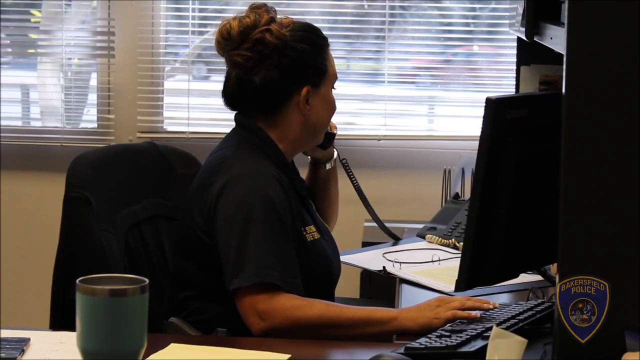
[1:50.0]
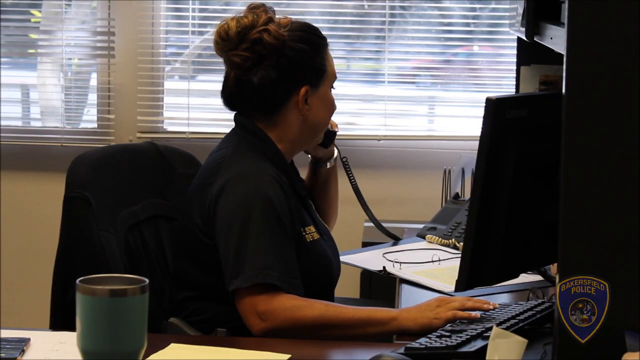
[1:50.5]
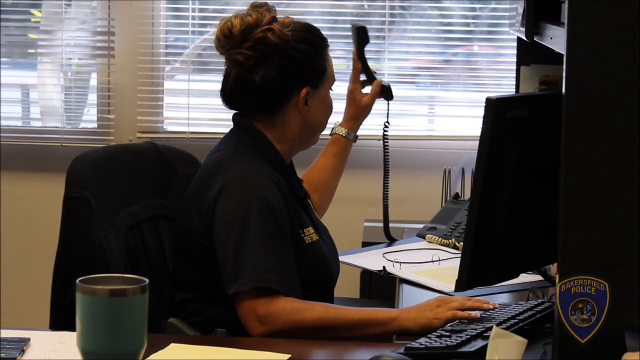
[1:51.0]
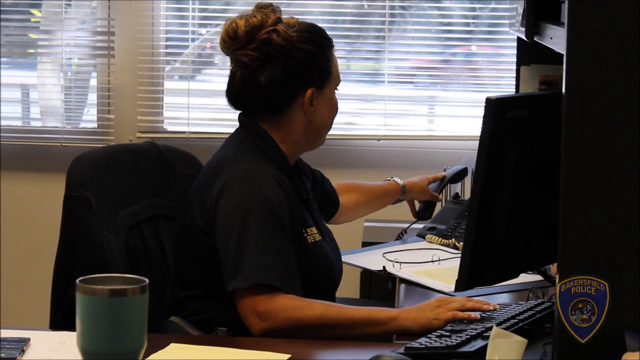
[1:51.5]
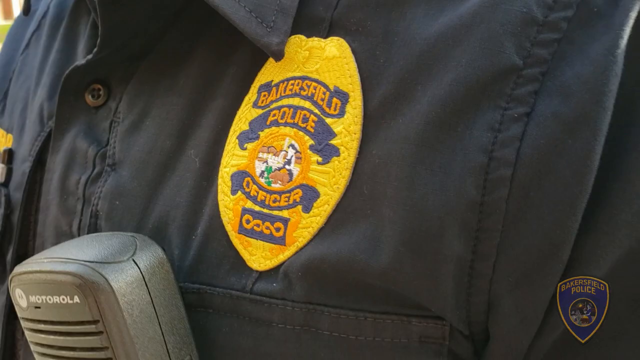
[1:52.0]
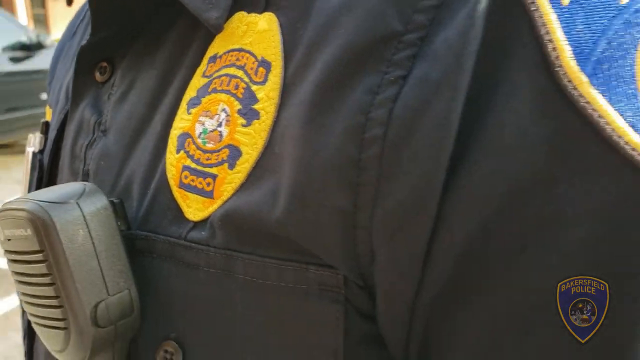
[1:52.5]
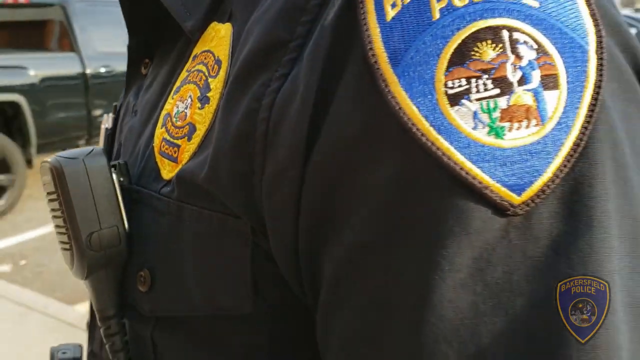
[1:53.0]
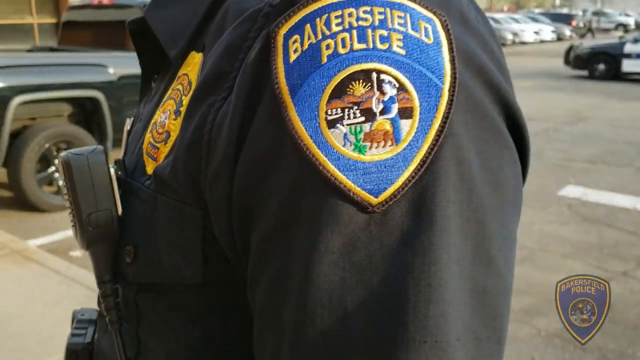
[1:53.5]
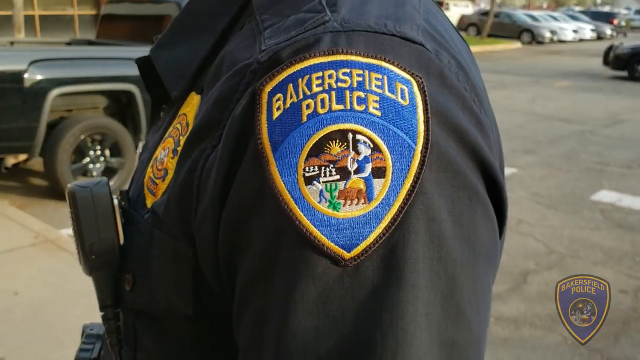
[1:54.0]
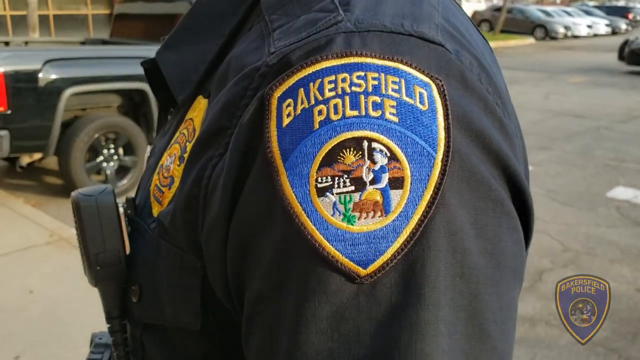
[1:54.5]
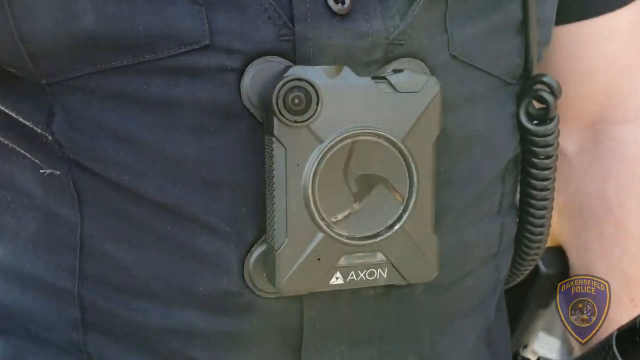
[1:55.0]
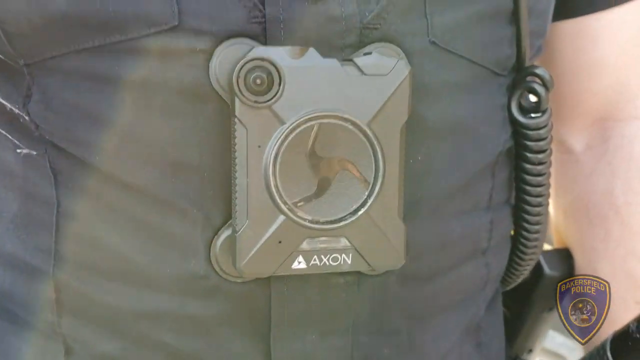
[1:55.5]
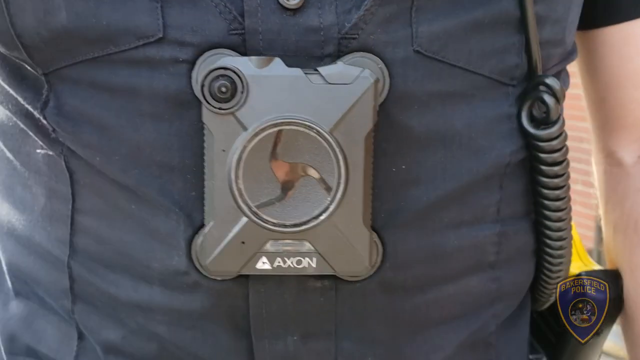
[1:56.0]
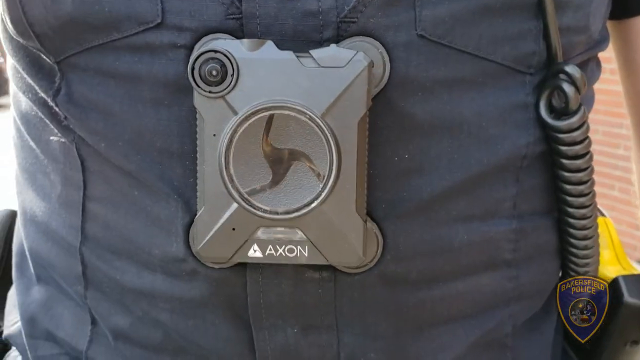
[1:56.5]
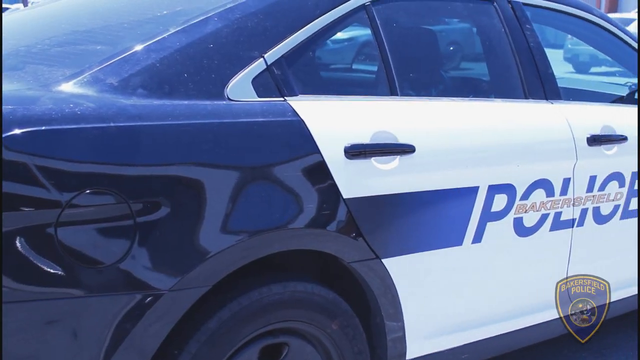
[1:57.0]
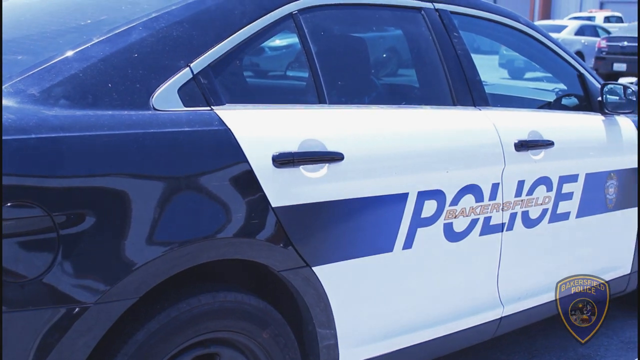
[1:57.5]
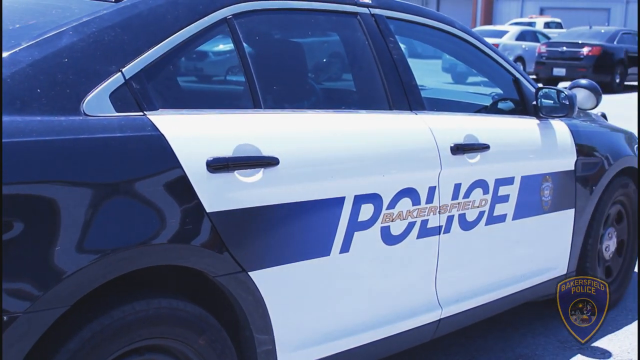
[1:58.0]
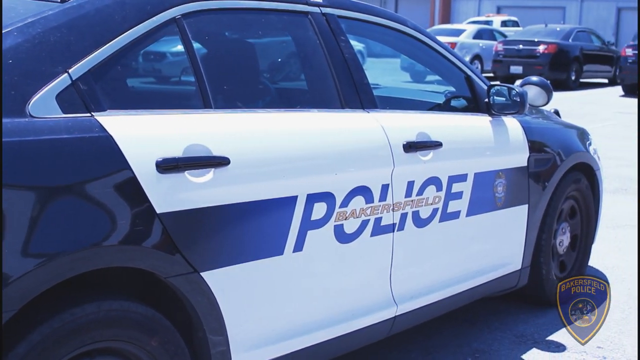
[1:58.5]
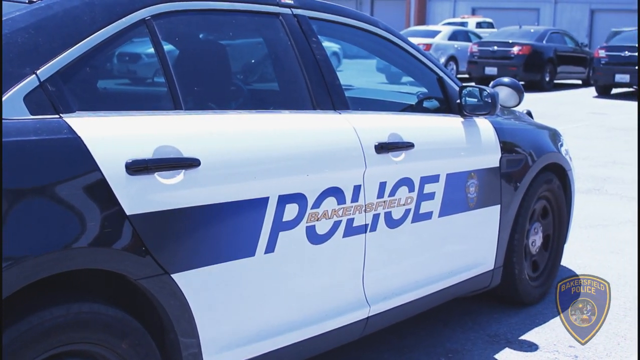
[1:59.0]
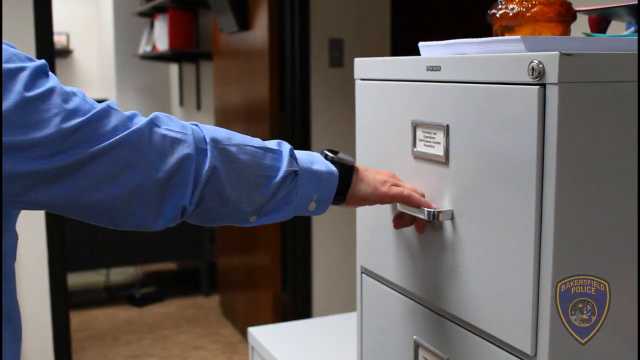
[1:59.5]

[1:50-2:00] A close-up shows the left front of a shirt with a kind of police badge emblem, a cloth patch rather than a metal badge, reading "Bakersfield Police" and "Officer", with sort of a box containing a gold squiggle below that. The background of everything is a bright yellow-gold color. The camera backs up, revealing that the officer has a sort of gray, kind of handheld microphone at the center, and another police department patch on his left arm. Another feature is shown: a gray, rectangular, hard plastic object with the word "Axon" on the bottom. It looks like it might be a camera, maybe a body cam, and seems to be at the front of the police officer. An image then shows the Bakersfield Police sign or label on the right side of a police car, which is almost a dark blue color with some white; the doors are white.